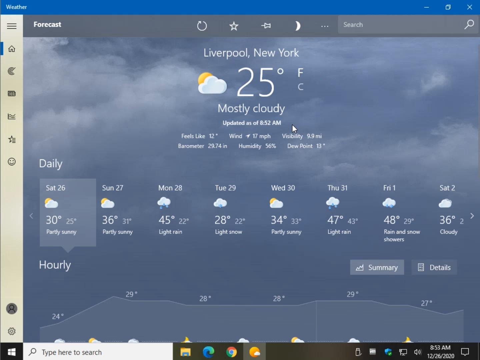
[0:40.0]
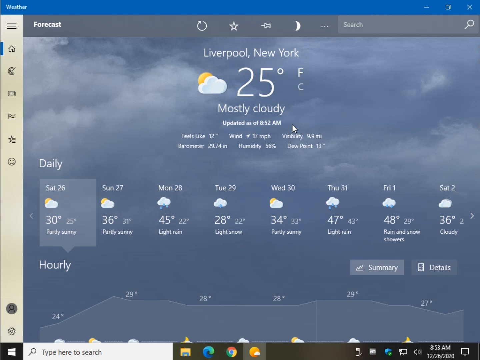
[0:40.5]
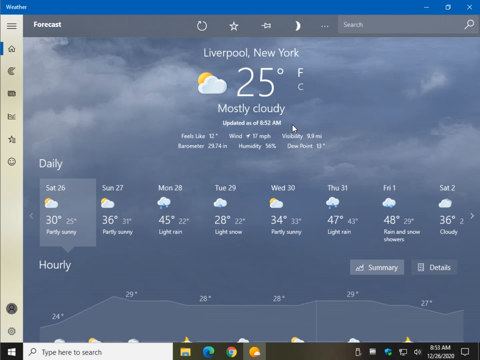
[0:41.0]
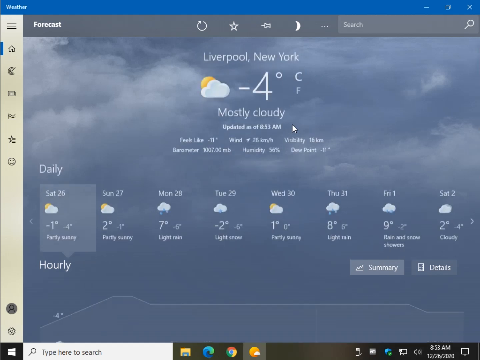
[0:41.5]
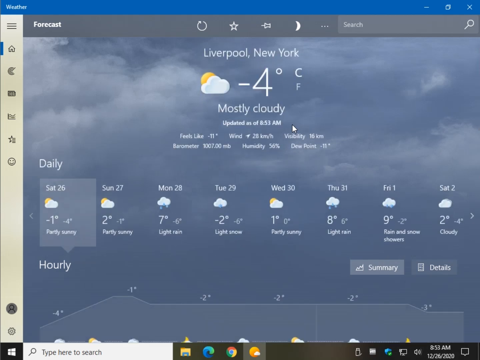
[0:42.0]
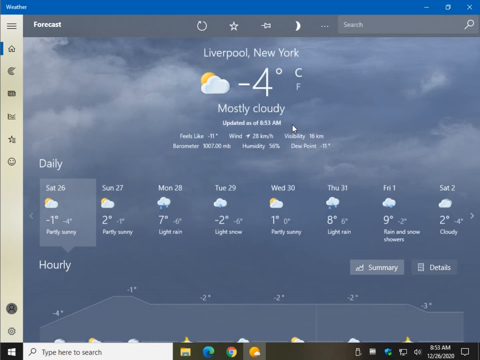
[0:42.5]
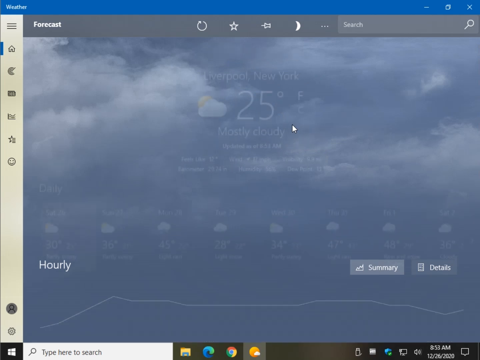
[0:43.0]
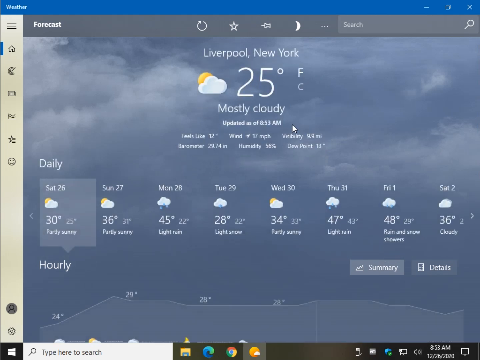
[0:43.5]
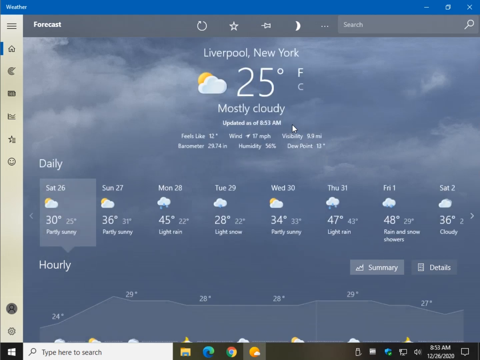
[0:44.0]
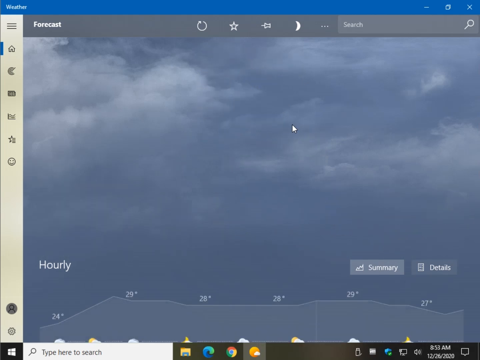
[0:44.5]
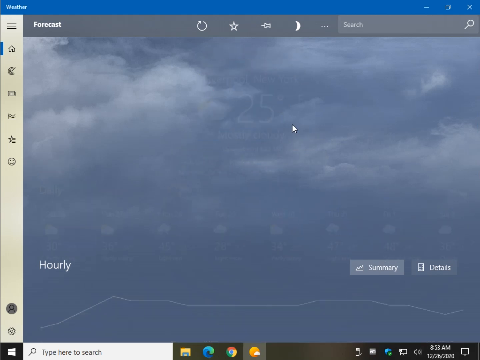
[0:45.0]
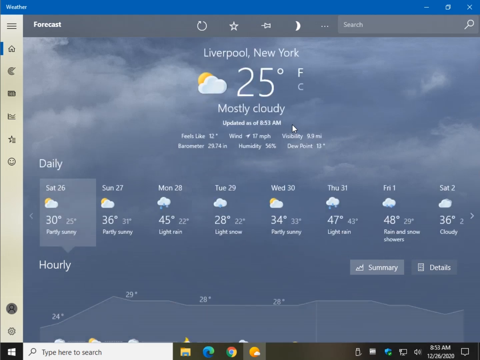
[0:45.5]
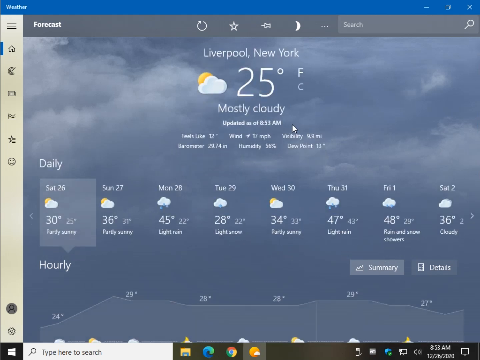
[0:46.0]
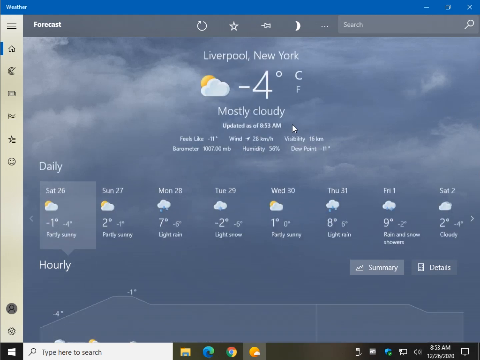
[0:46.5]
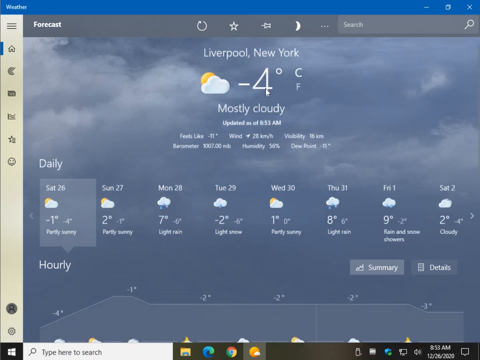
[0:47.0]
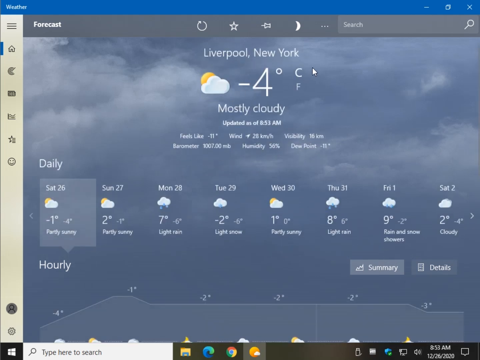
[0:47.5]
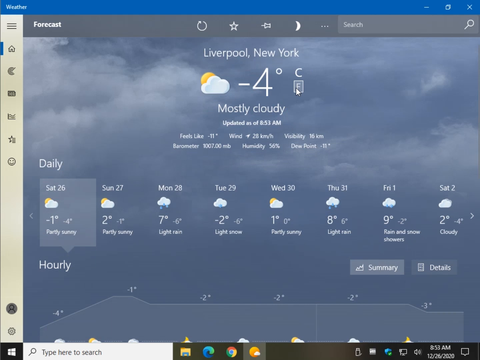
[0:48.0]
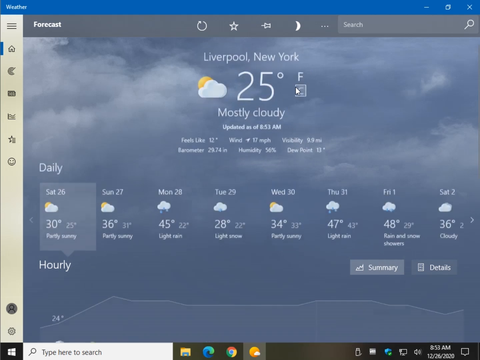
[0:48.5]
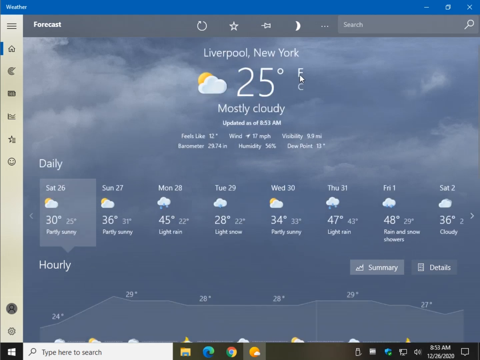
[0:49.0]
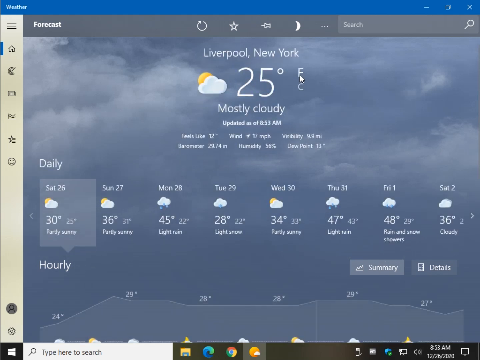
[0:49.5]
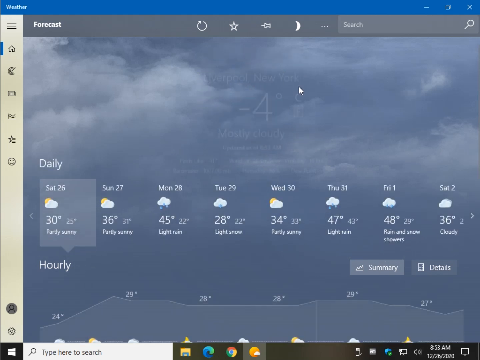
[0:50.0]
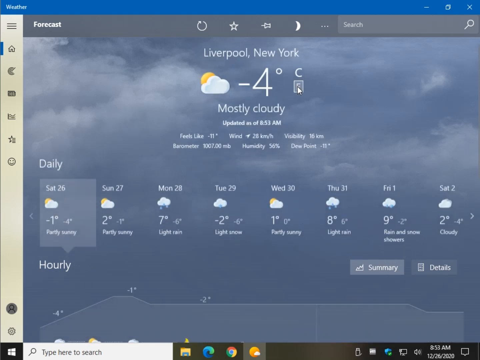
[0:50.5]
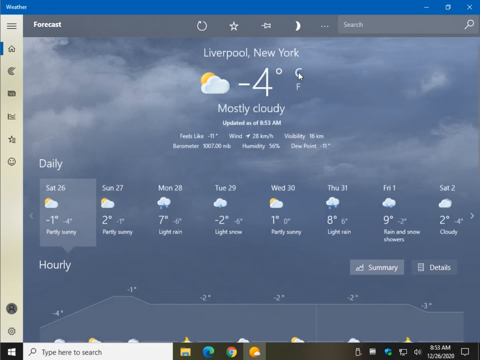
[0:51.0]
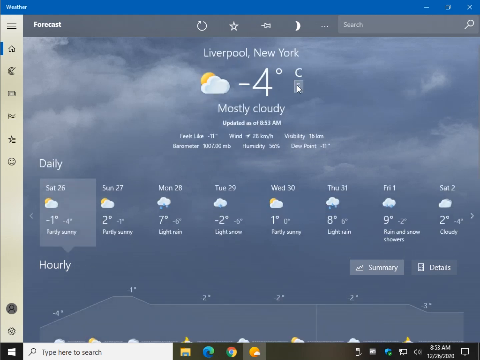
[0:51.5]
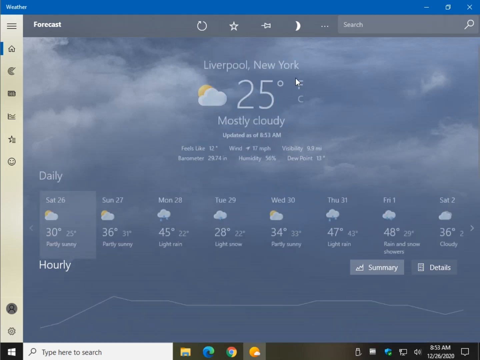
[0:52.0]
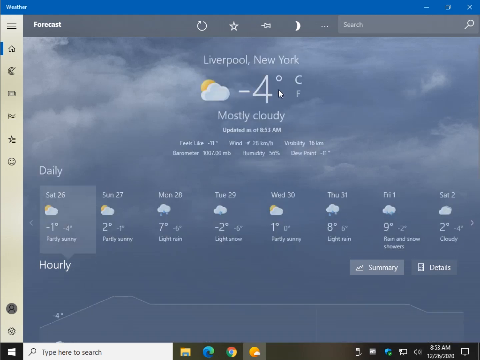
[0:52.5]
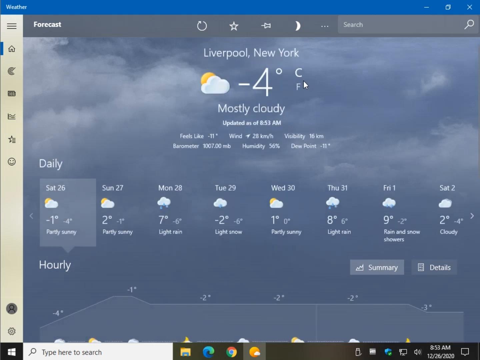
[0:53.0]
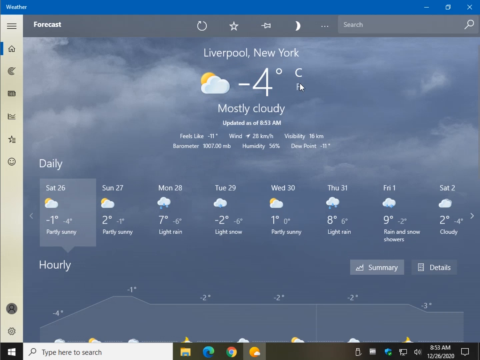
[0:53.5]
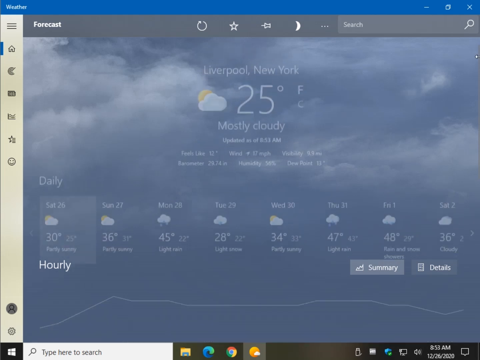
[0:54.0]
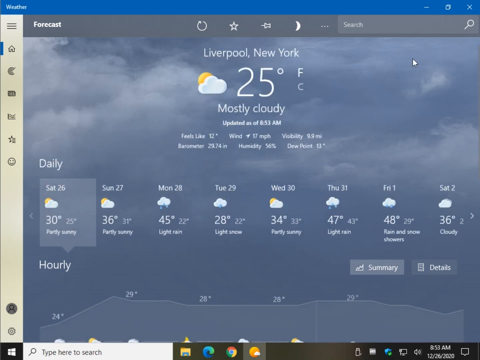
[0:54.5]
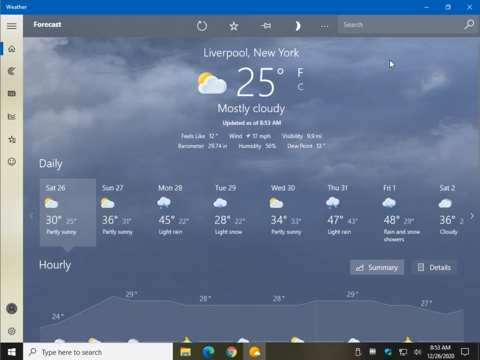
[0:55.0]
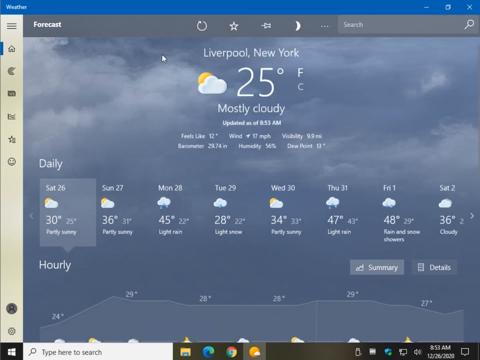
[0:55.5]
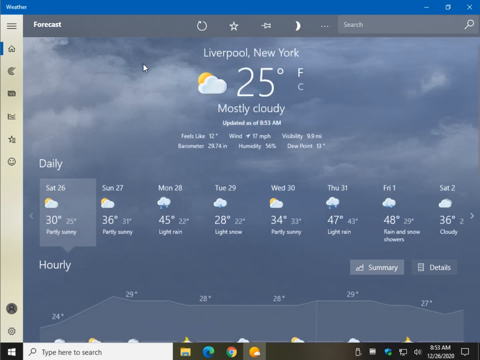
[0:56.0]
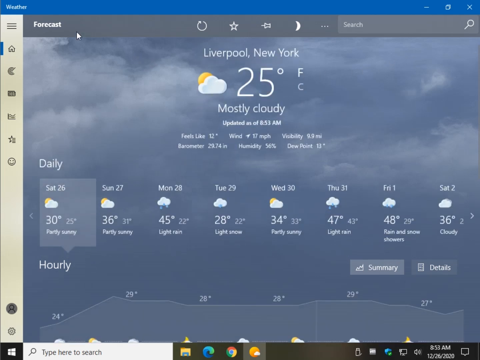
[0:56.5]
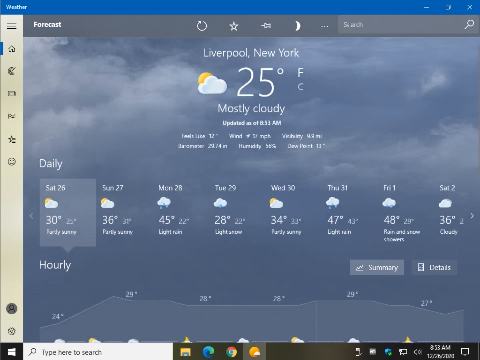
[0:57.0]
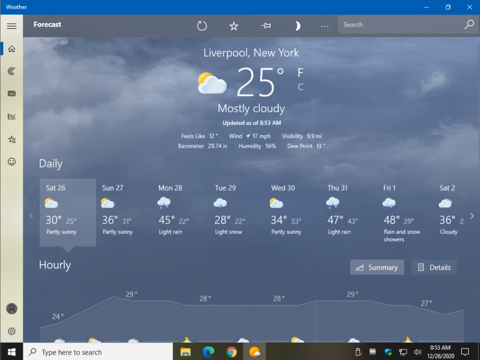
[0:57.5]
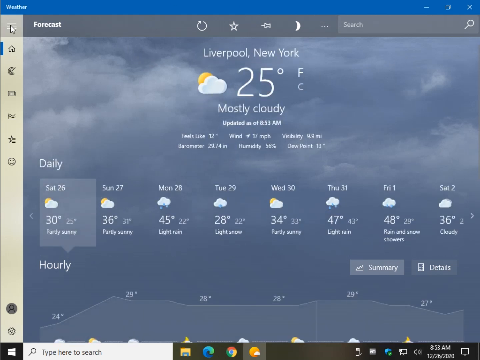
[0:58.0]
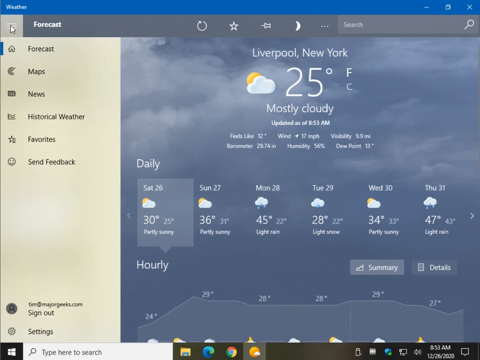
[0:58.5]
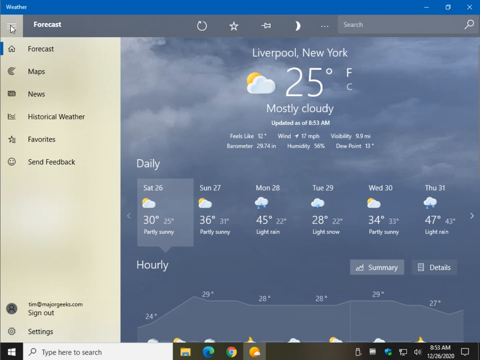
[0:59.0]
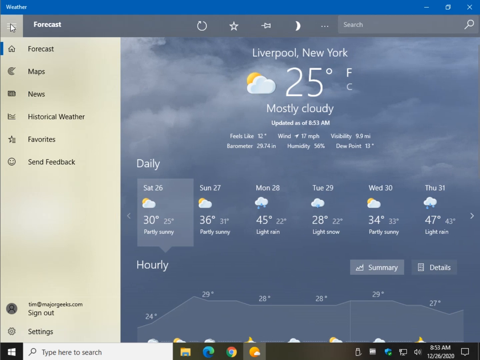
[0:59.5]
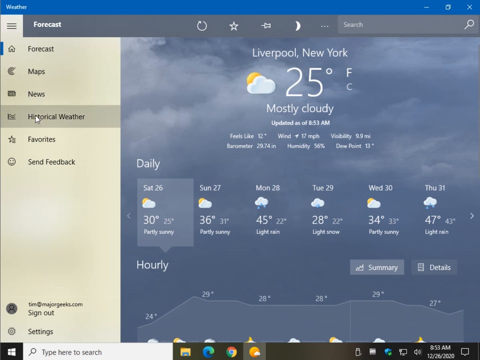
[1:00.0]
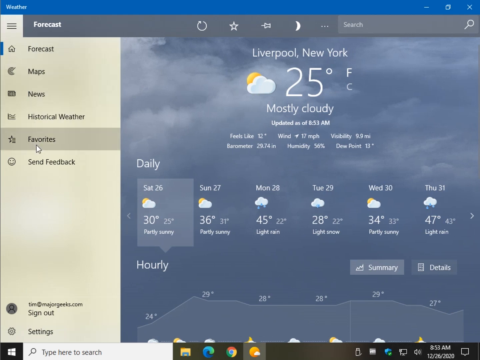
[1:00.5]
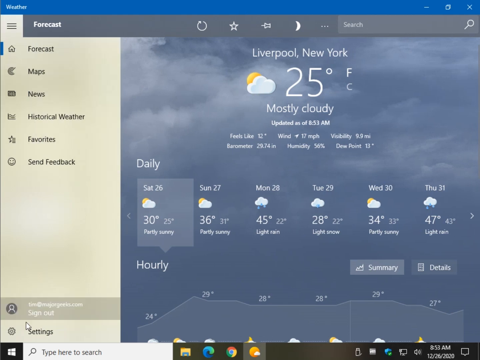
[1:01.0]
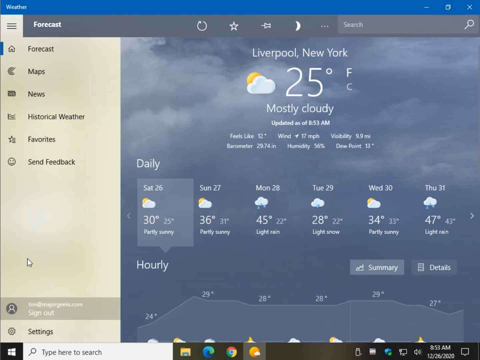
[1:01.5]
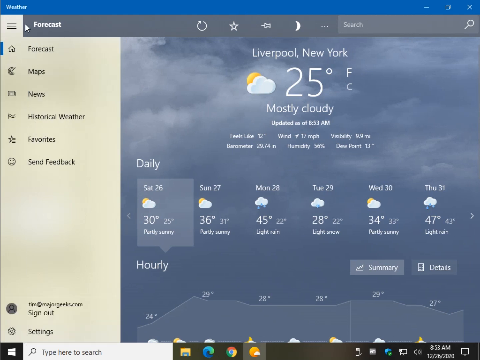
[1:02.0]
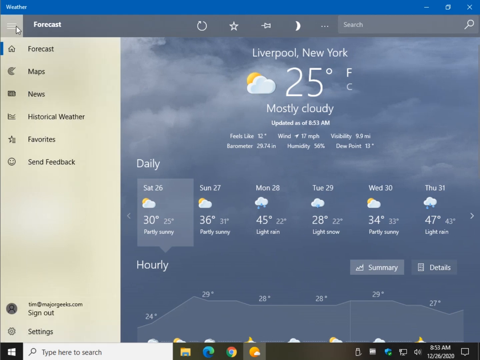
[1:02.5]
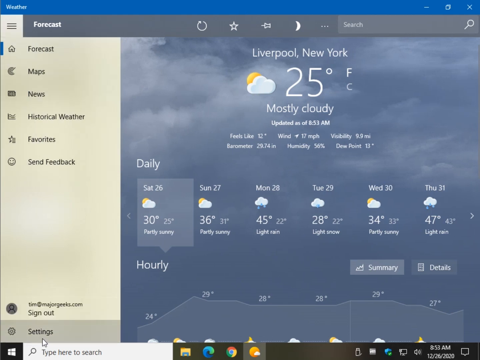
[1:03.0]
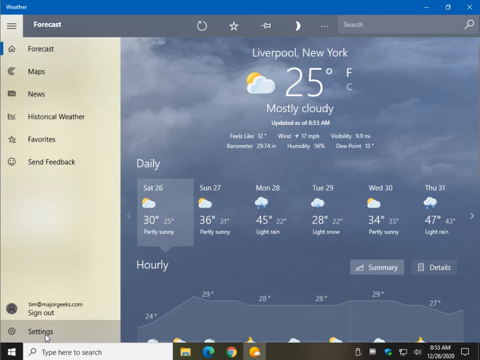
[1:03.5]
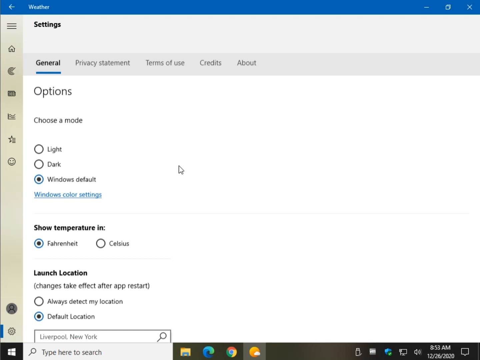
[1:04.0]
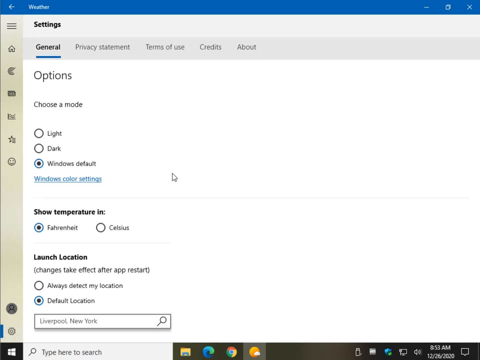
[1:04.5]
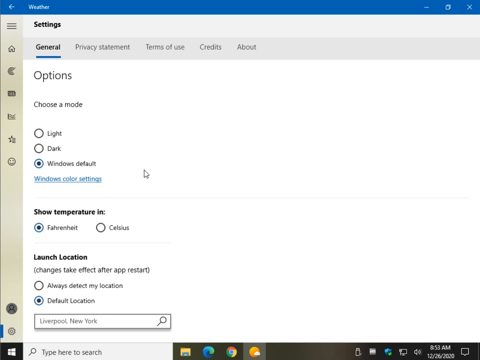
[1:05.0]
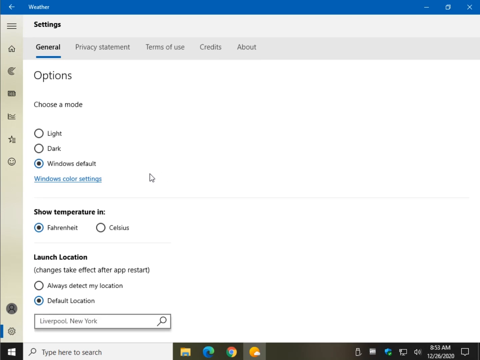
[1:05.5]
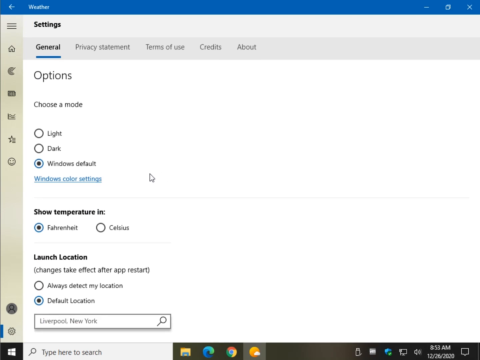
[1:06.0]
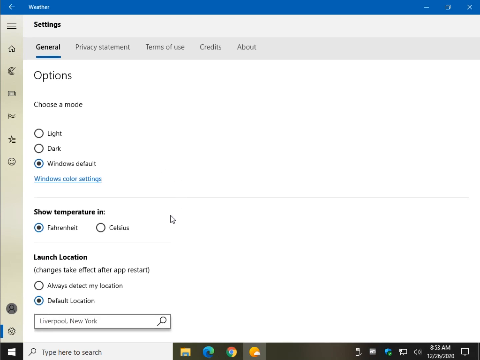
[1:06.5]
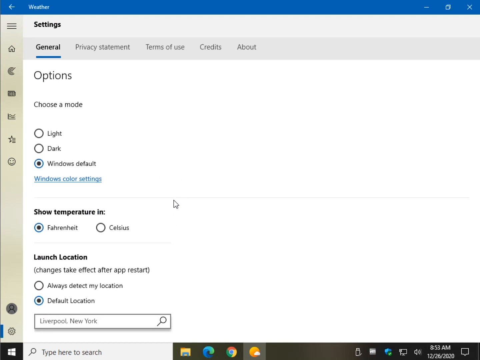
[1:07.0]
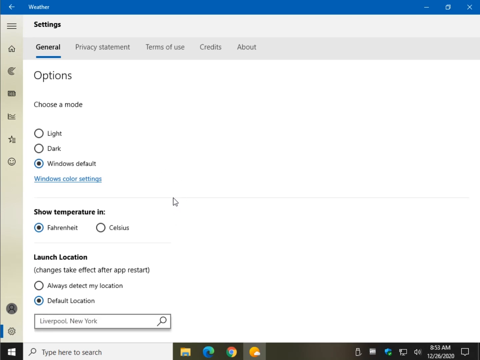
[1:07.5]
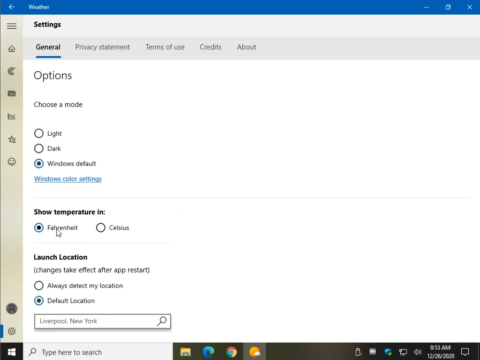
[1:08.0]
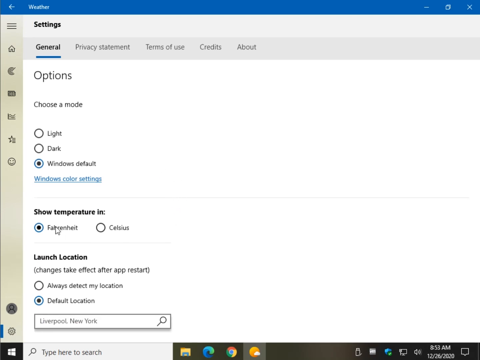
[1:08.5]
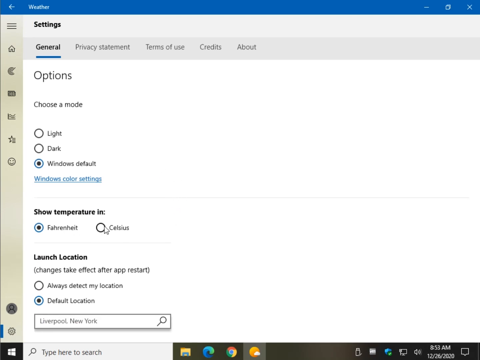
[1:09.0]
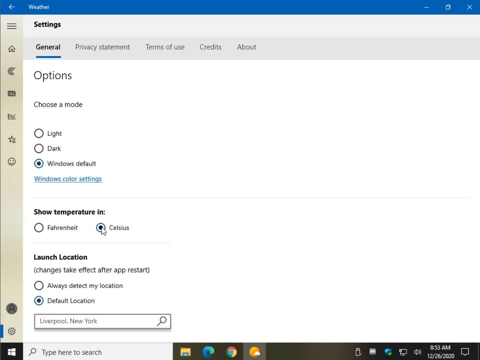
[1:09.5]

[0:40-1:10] The Liverpool, New York page shows 25 degrees Fahrenheit with F above C, mostly cloudy, updated at 8:52 a.m. The daily forecast still shows January 26th, but the temperatures now read 30 degrees and 25 degrees, looking like cold-ish winter days. The display is switched between units: in Celsius the temperatures are single digits, minus one and minus four, and in Fahrenheit they are 30 and 25 degrees. It changes back and forth several times before the user scrolls down the side looking for the menu and clicks on settings, then scrolls down to the show temperature in category and selects Celsius.